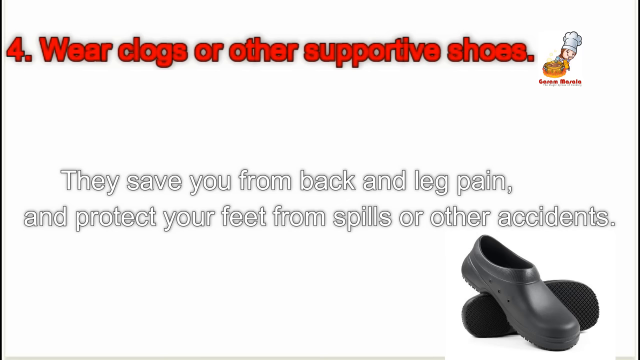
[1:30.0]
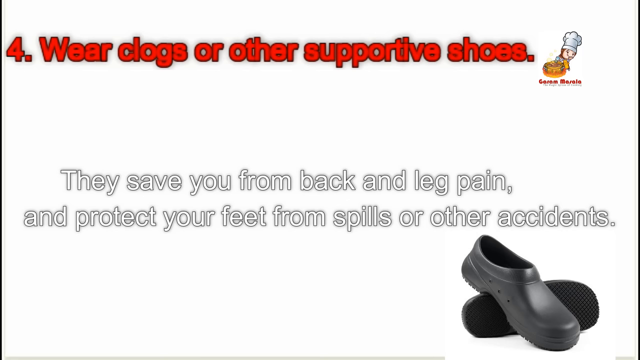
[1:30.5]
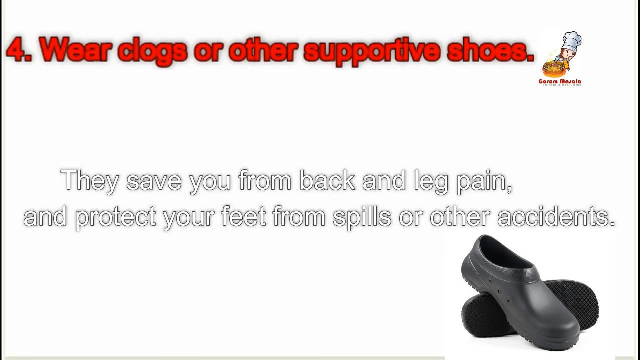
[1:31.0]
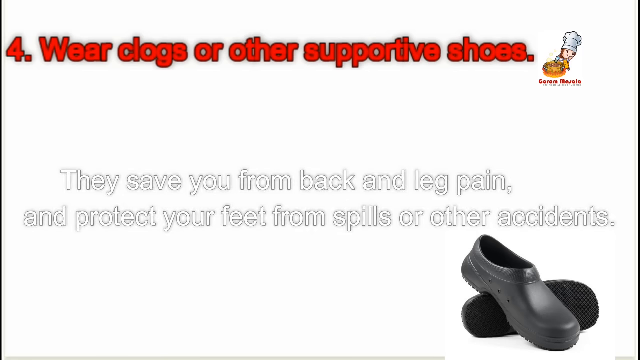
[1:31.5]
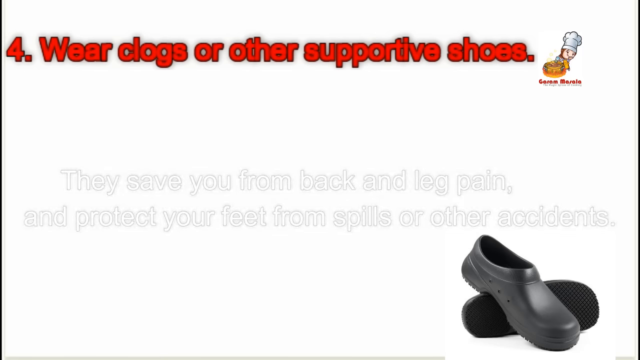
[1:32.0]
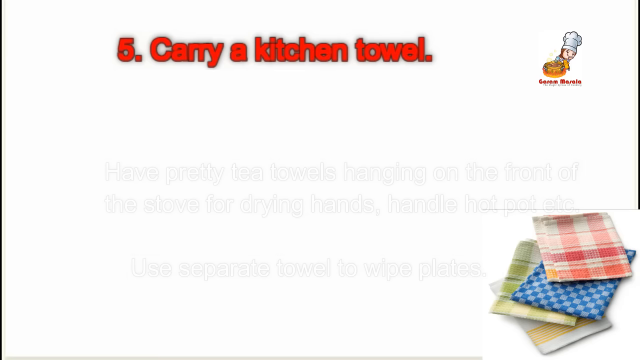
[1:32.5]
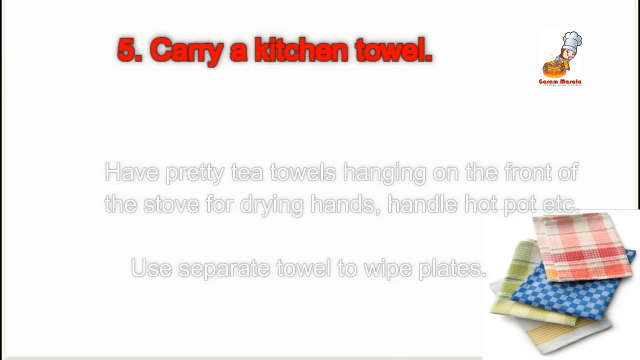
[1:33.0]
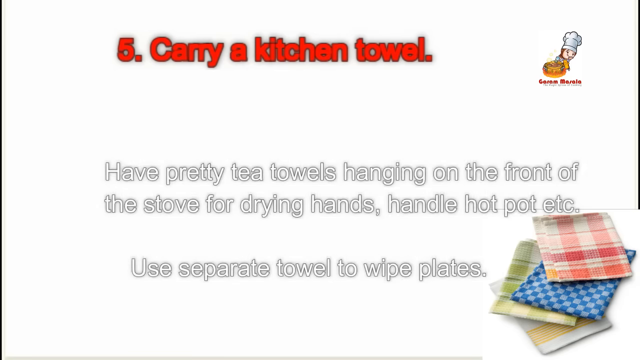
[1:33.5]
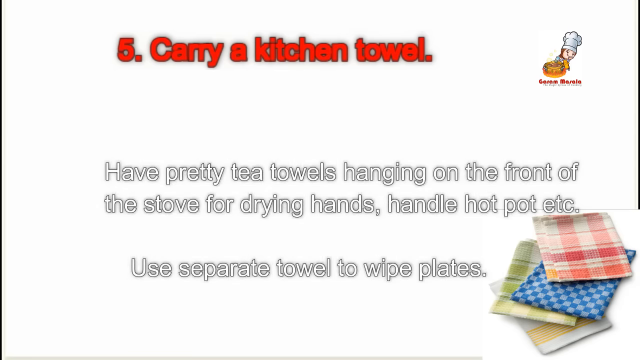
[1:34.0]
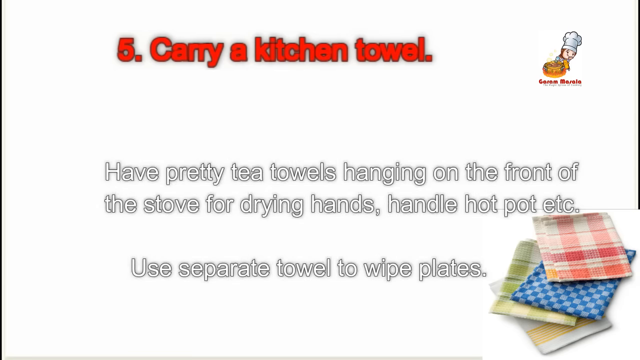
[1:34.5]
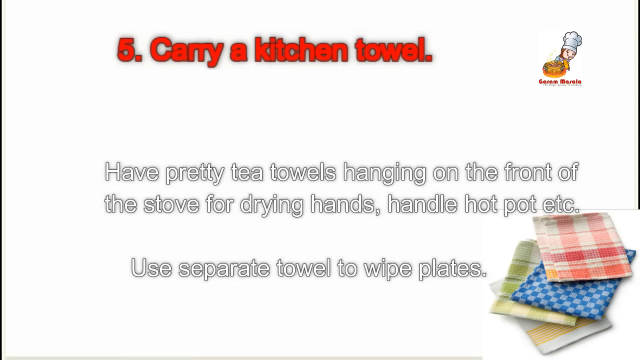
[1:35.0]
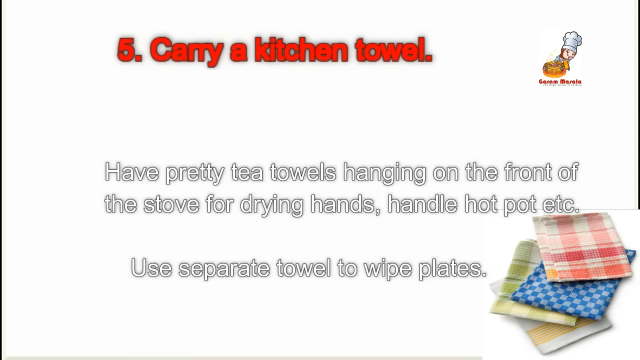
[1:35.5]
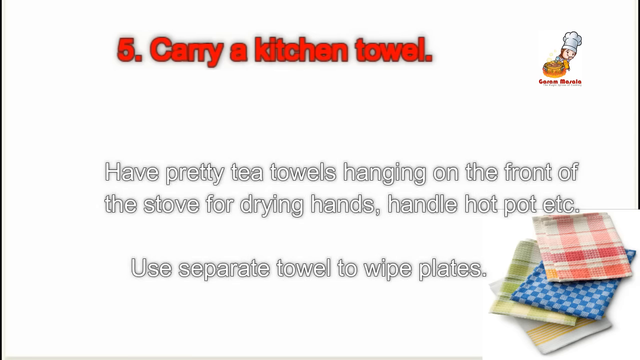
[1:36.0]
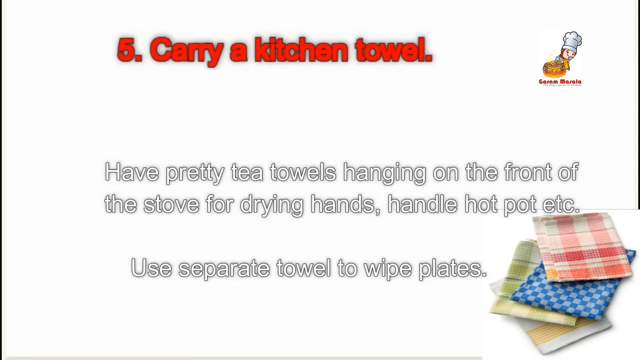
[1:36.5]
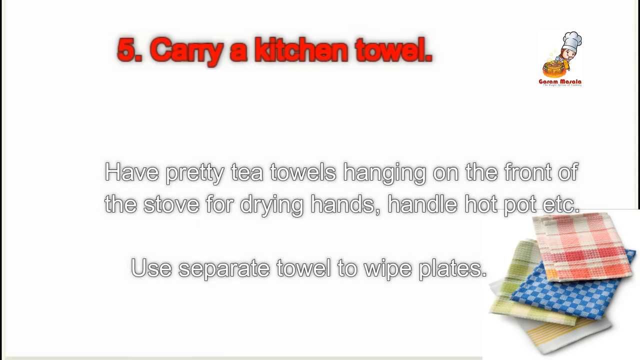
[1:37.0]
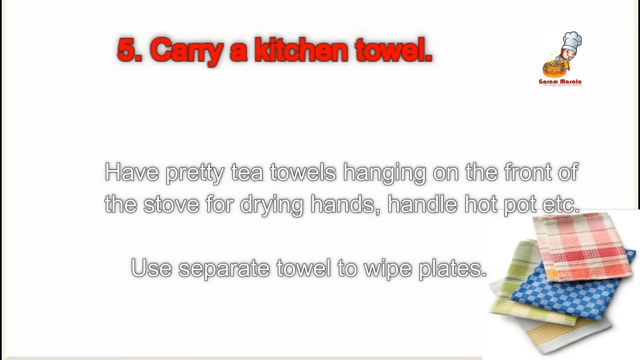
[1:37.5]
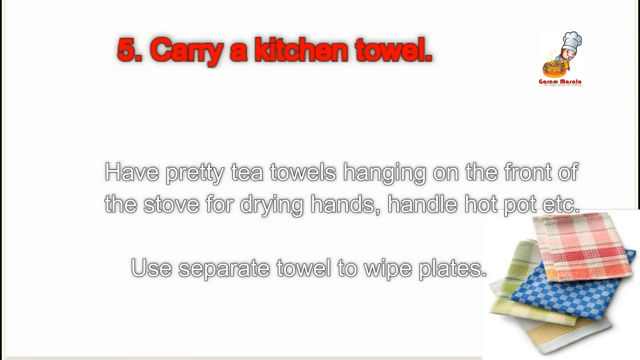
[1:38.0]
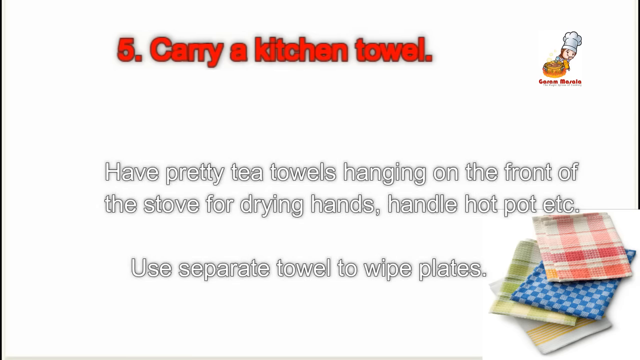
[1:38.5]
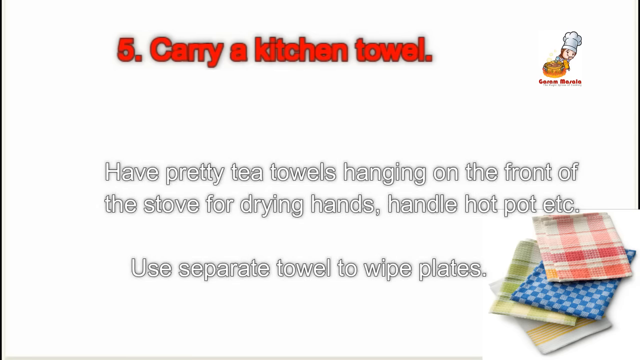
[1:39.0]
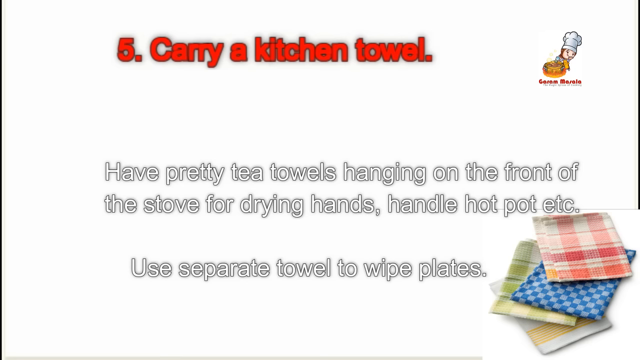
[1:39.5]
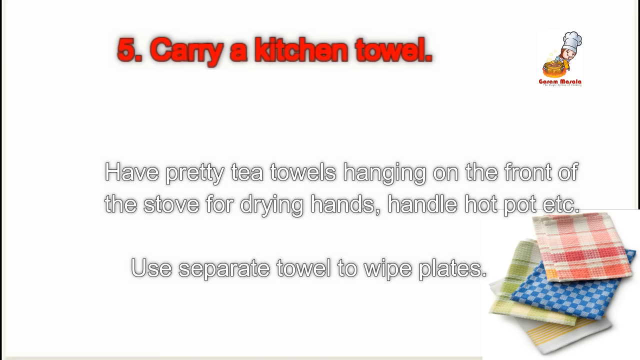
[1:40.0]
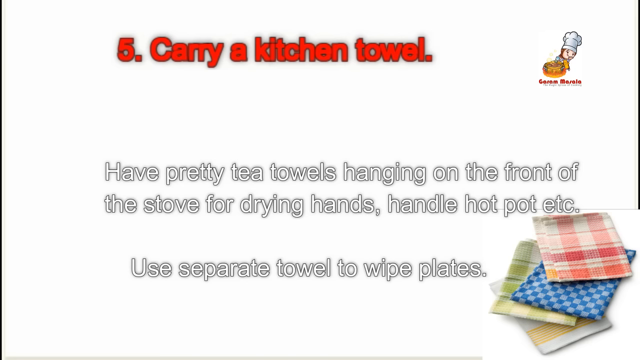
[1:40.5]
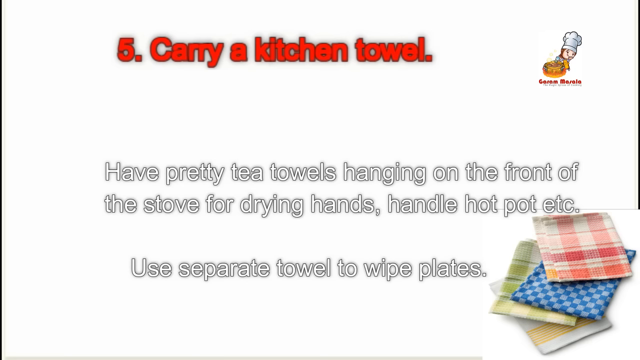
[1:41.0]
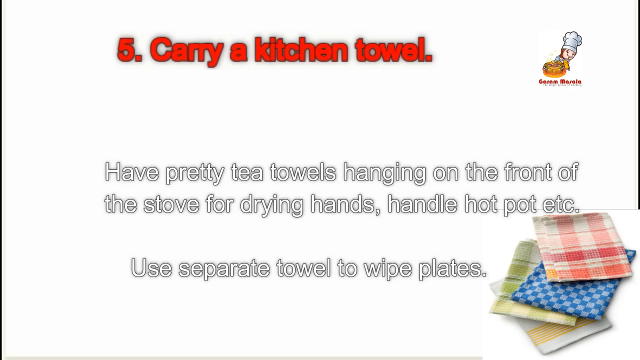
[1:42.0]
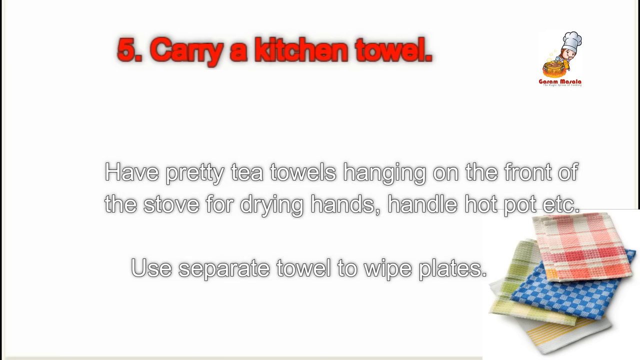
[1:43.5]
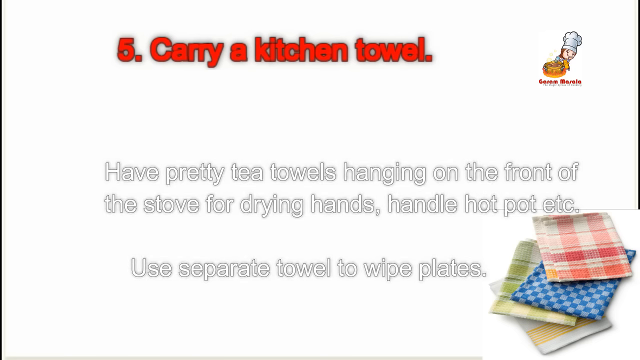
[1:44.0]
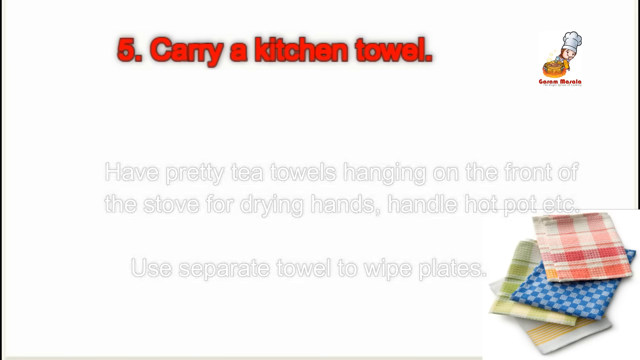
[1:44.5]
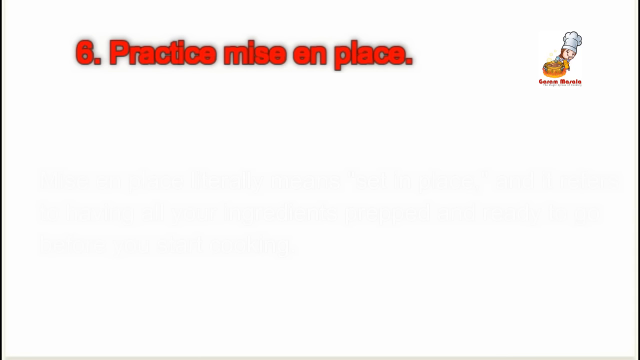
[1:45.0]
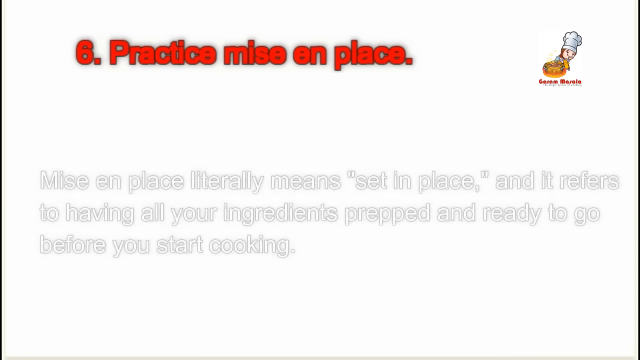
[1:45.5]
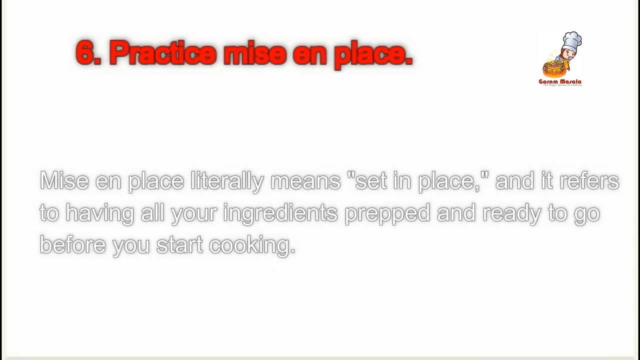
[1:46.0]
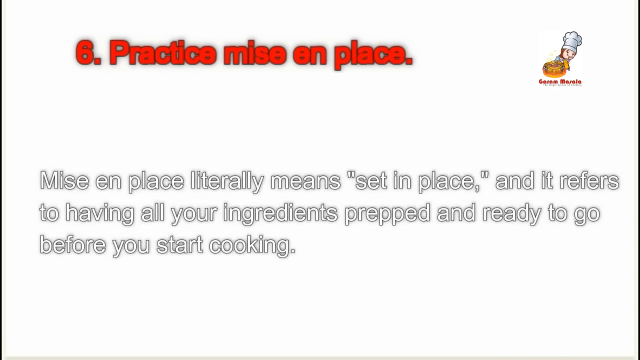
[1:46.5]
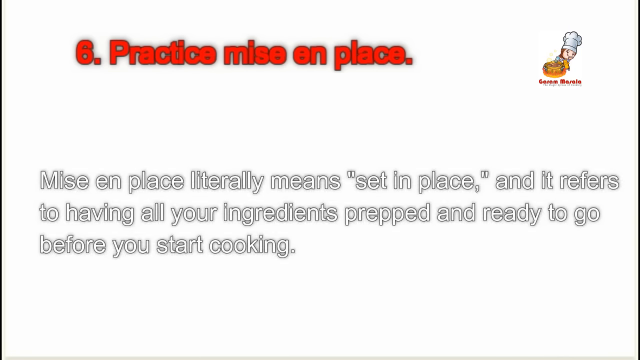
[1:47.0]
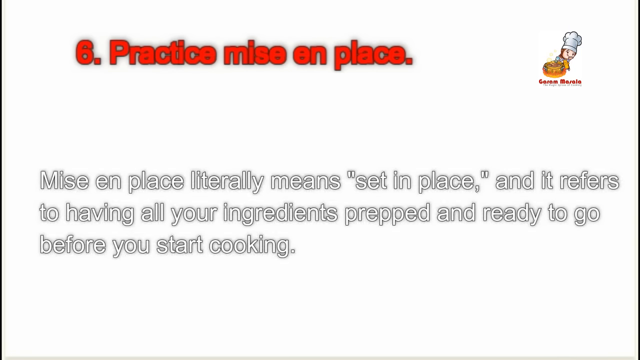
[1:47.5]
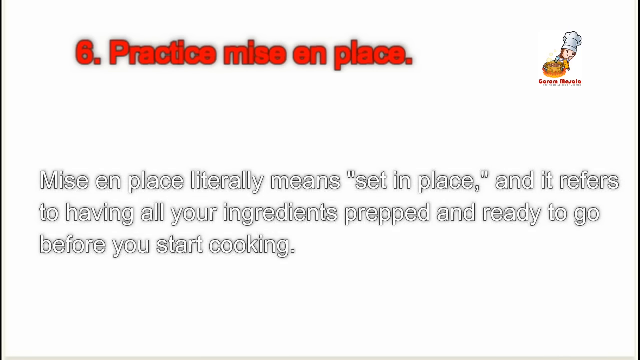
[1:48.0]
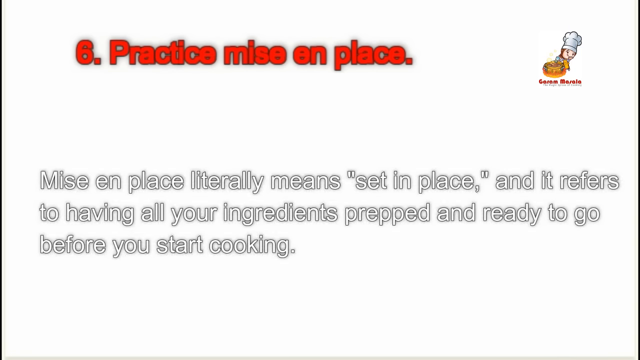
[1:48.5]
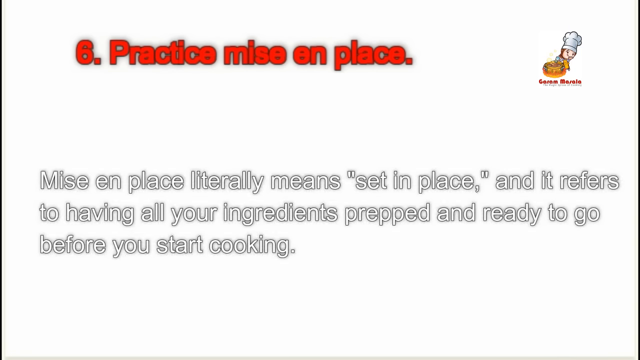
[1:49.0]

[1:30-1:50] A slide has red text on top with the number four and "wear clogs or other supportive shoes." To the right is a cartoon character wearing a chef's hat with a dish in front of them and some red text underneath. In the middle of the slide, white text with a gray border reads "they save you from back and leg pain and protect your feet from spills or other accidents," and in the lower right corner are black clogs with some holes on the side. The video cuts to another slide reading "number five" in red text and "carry a kitchen towel," with white text underneath that includes "Have pretty tea towels hanging on the front of the stove for drying hands" and "Use separate towel to wipe plates." In the lower right corner are three different tea towels: one white and red, one checkered blue and gray, and underneath them a green and white one.